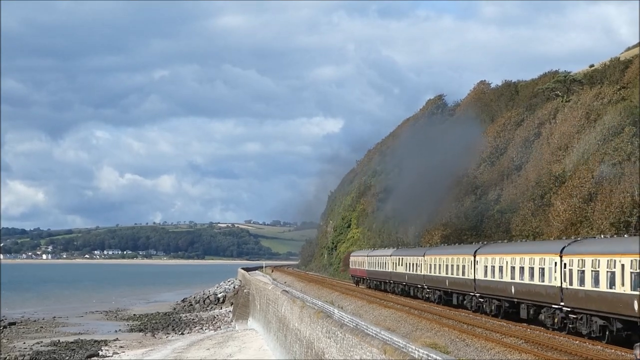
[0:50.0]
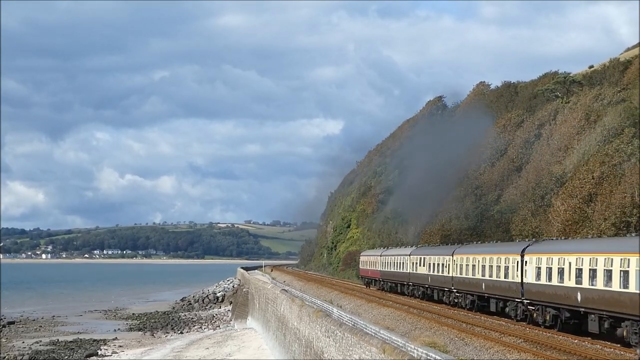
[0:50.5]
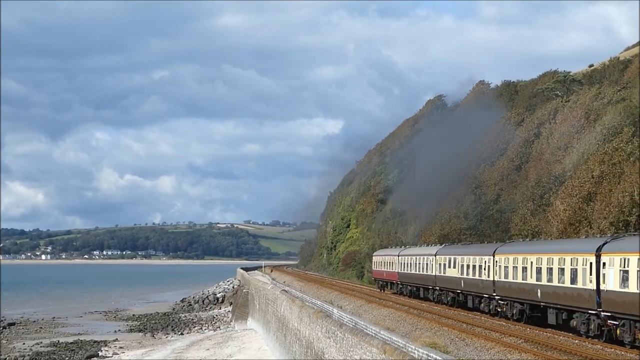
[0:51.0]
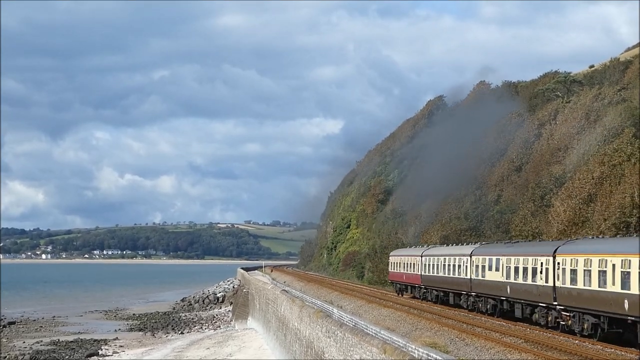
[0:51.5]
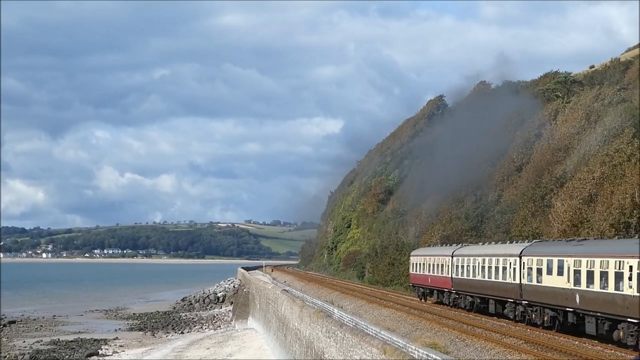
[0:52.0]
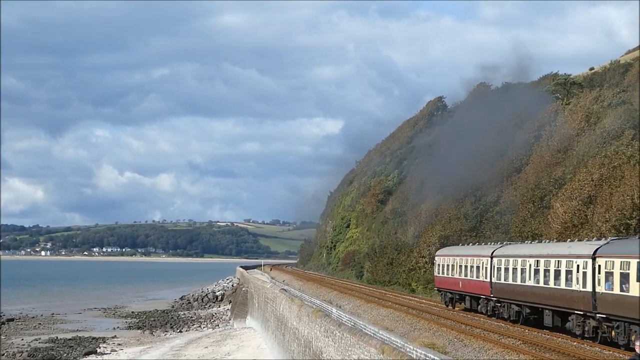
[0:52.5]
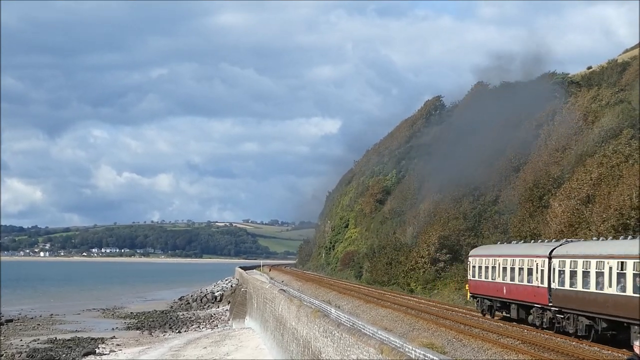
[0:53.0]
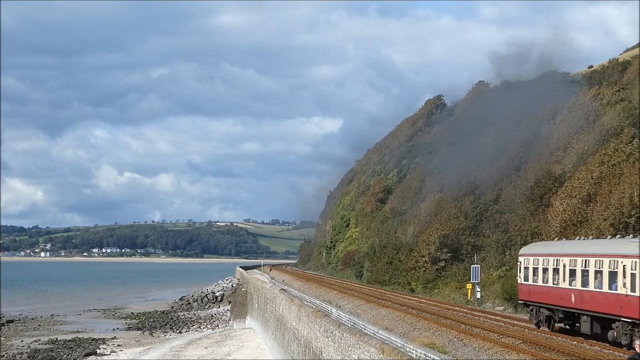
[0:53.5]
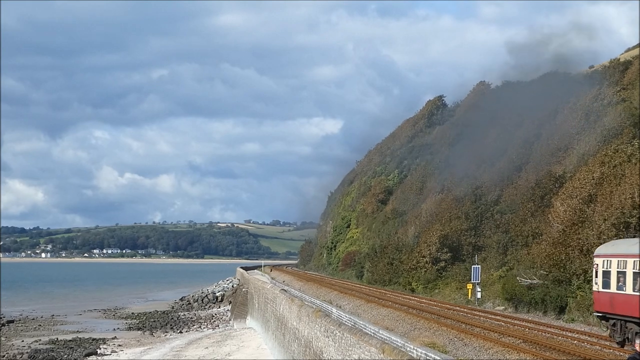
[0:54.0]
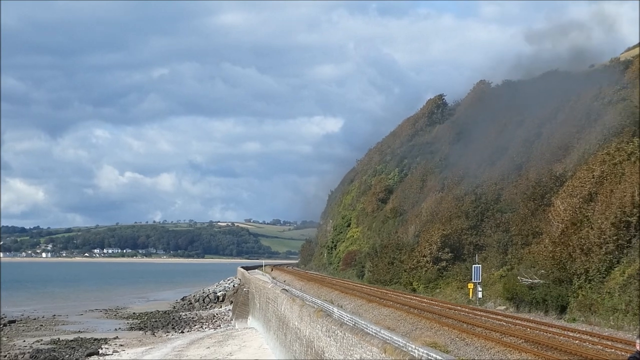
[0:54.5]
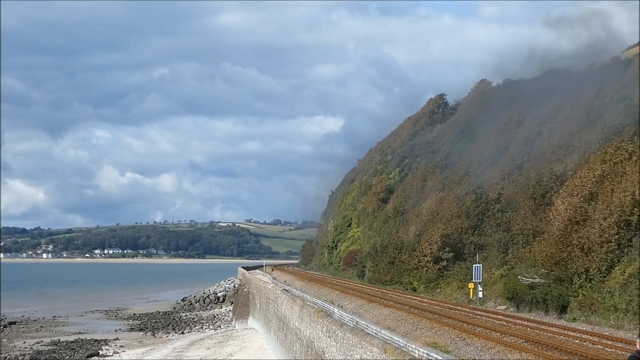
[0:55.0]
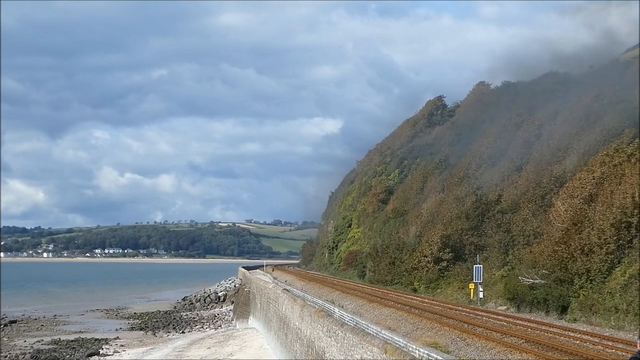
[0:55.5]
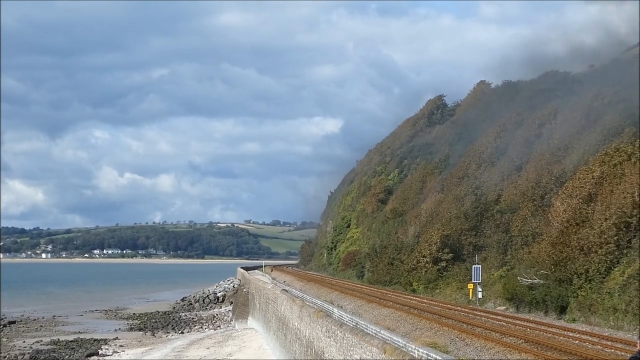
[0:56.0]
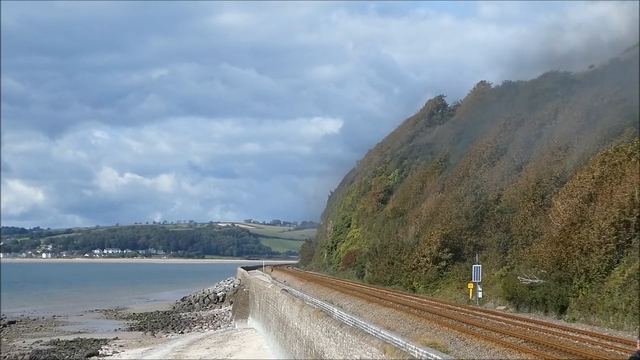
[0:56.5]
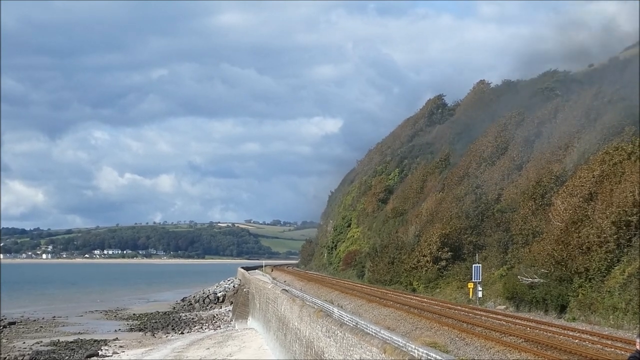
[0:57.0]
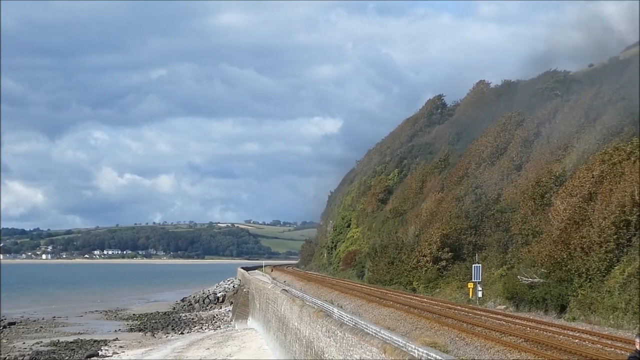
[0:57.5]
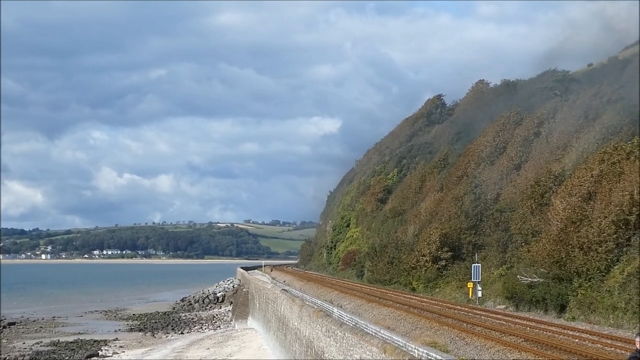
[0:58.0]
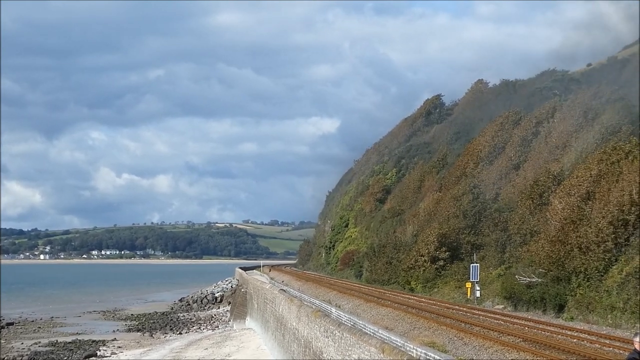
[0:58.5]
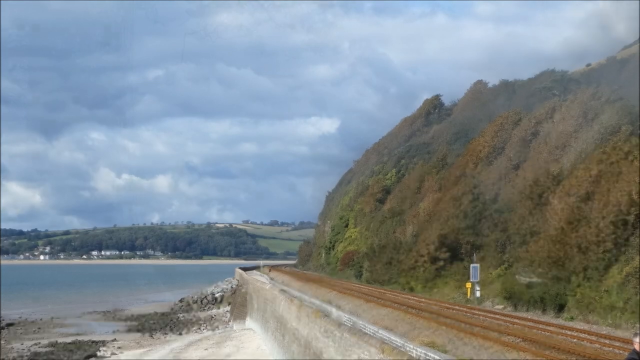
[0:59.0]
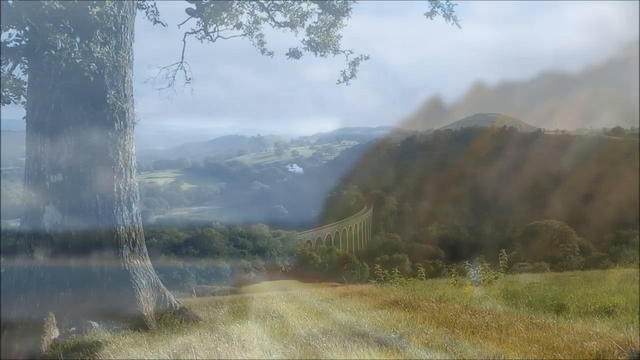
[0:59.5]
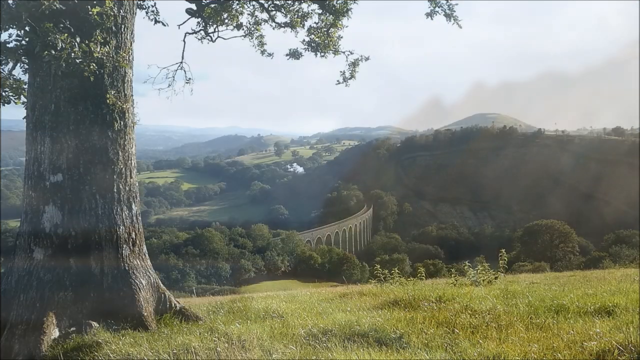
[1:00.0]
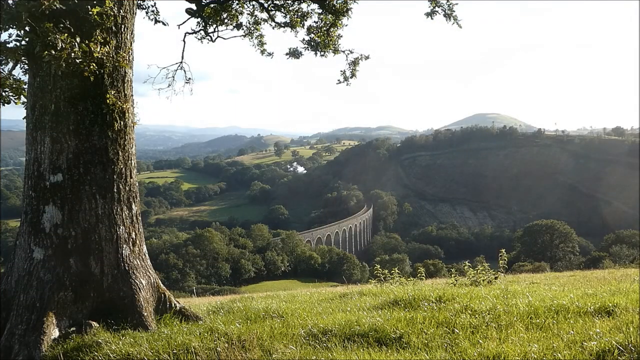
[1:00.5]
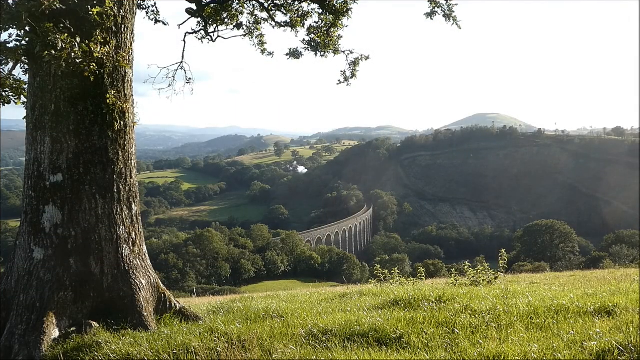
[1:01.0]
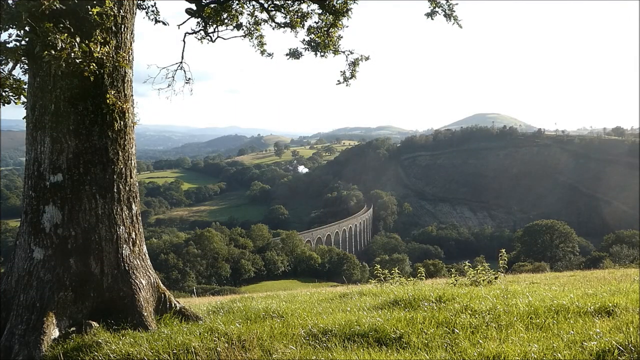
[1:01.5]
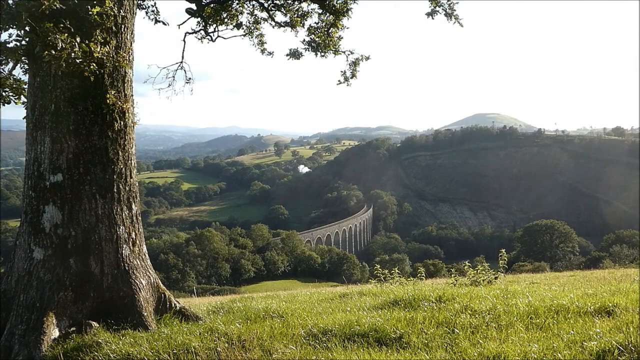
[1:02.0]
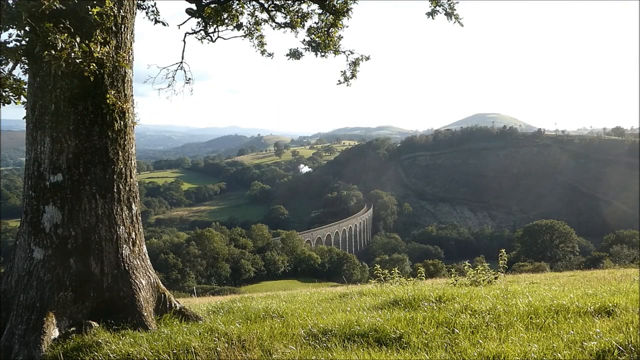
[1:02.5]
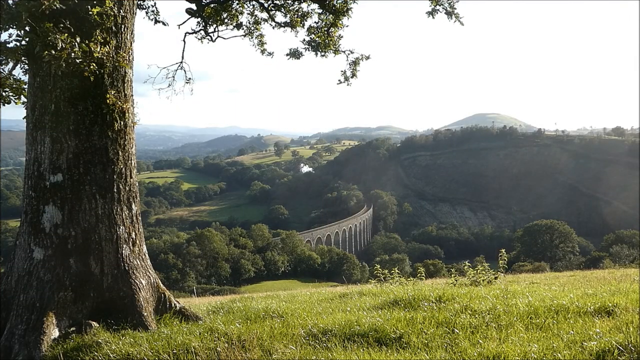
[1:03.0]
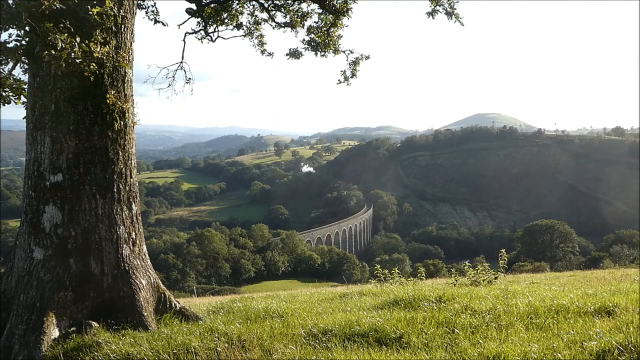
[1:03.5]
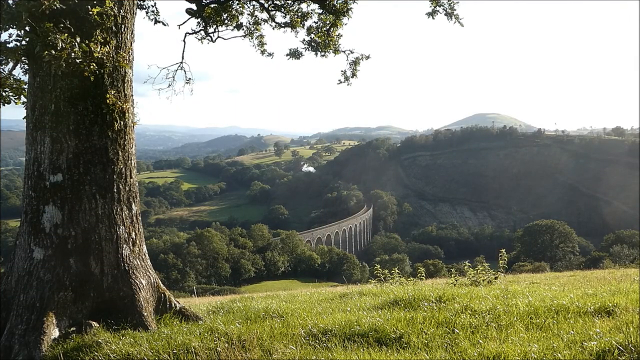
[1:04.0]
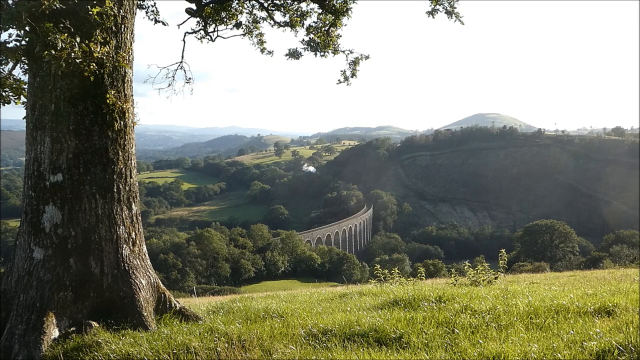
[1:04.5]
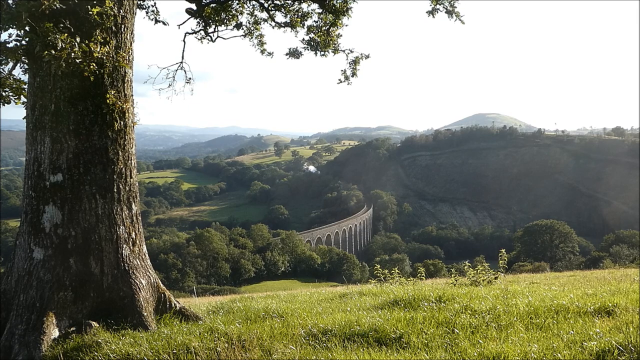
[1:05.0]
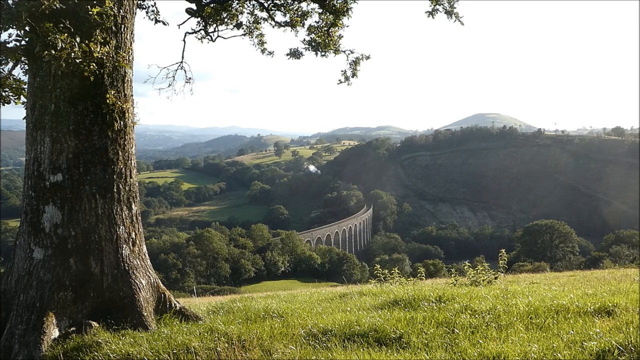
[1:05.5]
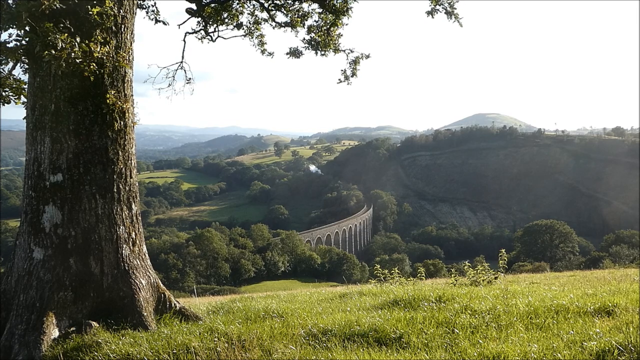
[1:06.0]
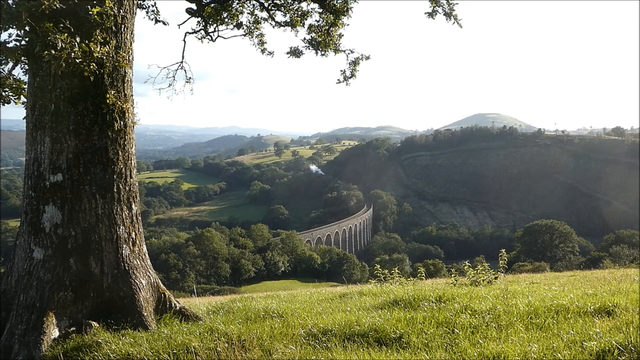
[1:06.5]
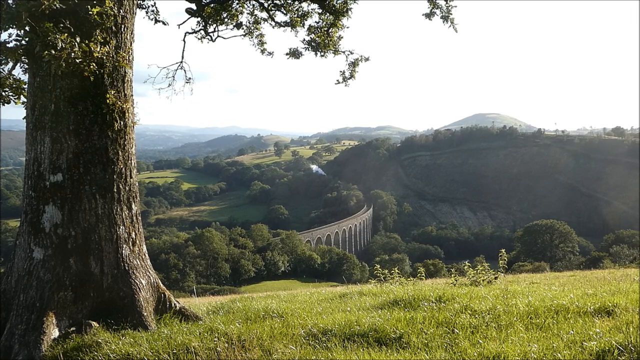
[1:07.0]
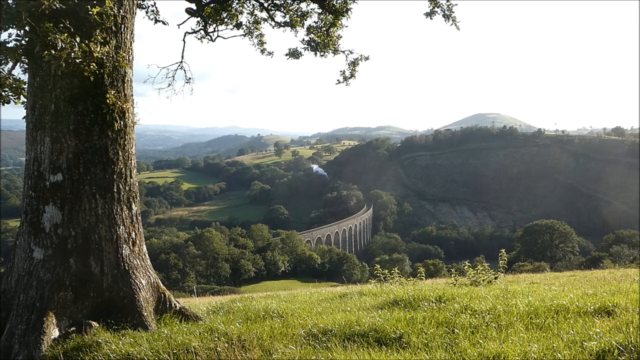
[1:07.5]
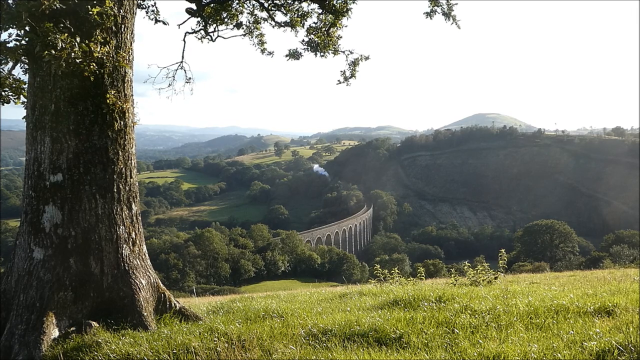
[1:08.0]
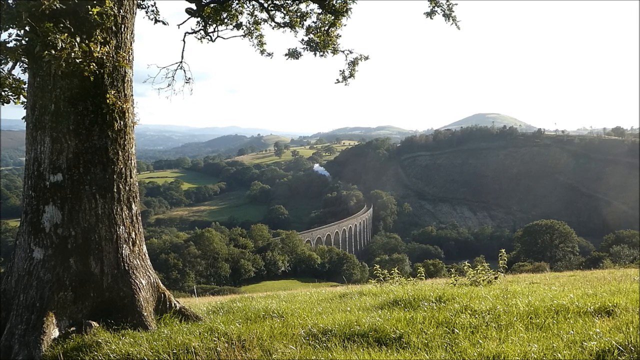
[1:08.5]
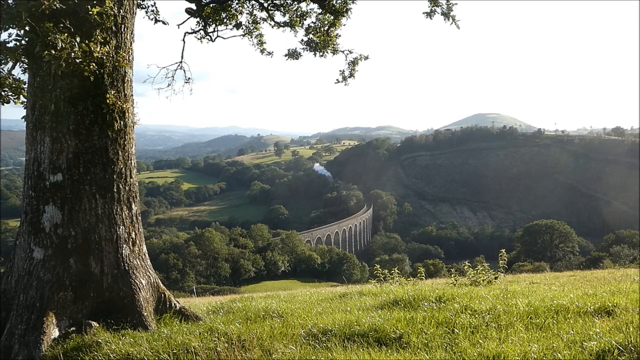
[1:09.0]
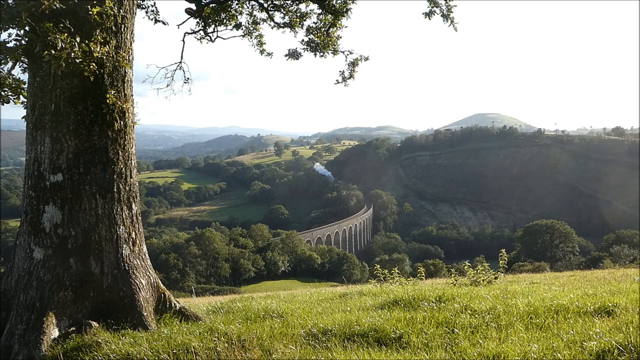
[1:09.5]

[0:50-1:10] The train finishes heading down toward the right side, toward the camera, and eventually goes off screen. Dark grey smoke lingers even after the train has completely left the scene. The scene then fades to a shot with a huge tree covering about 20-25% of the left-hand side; only the tree trunk and some of the leaves at the top are visible. In the background, grass, shrubs and trees fill the lower 65% of the screen from left to right. The rest of the screen, where the sky should be, is white, so bright that it can barely be made out. In the center is a bridge built for the train track, and the train is proceeding from the center back; it can be told only by the smoke, as no part of the train itself is visible yet.